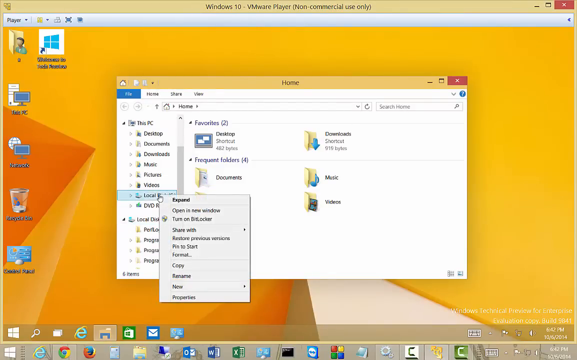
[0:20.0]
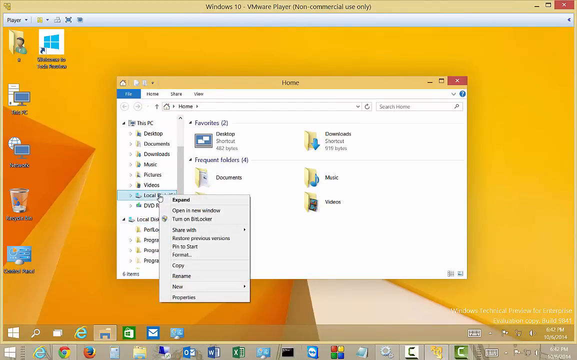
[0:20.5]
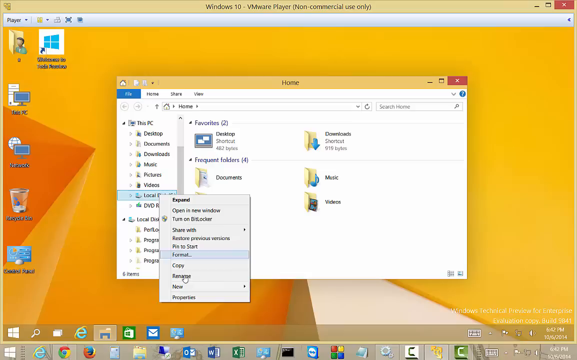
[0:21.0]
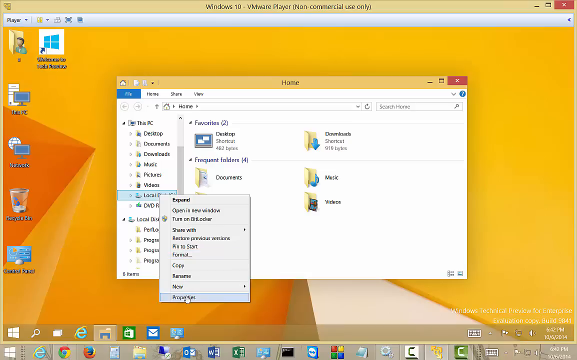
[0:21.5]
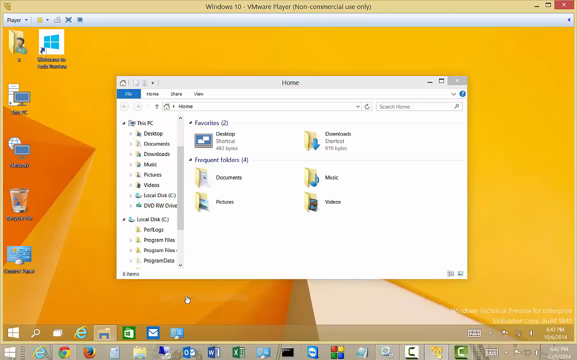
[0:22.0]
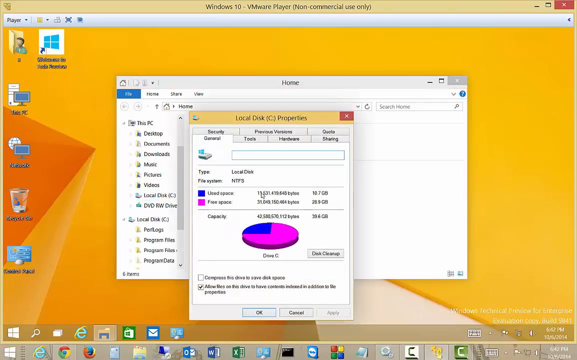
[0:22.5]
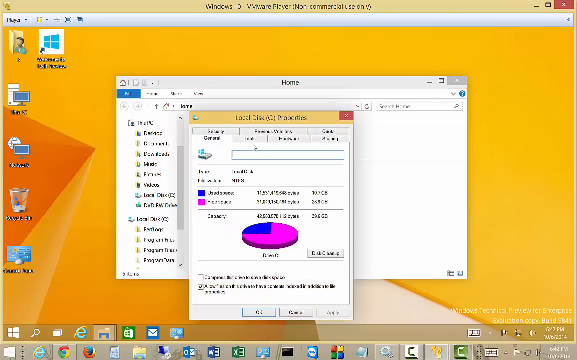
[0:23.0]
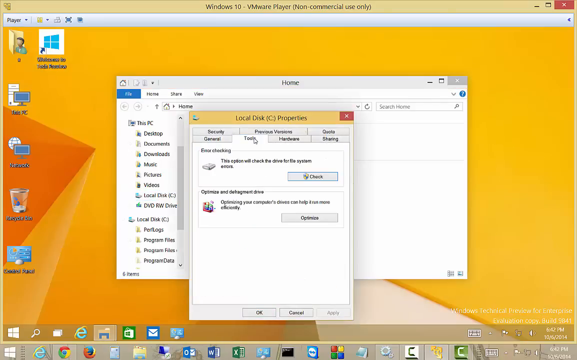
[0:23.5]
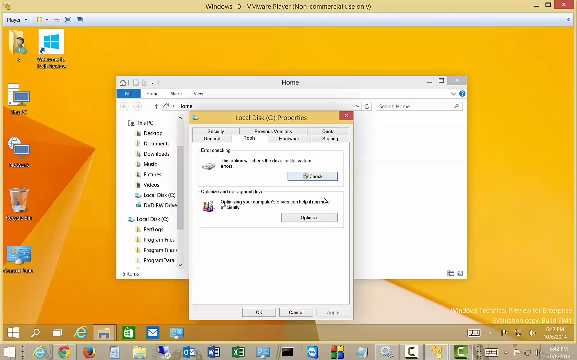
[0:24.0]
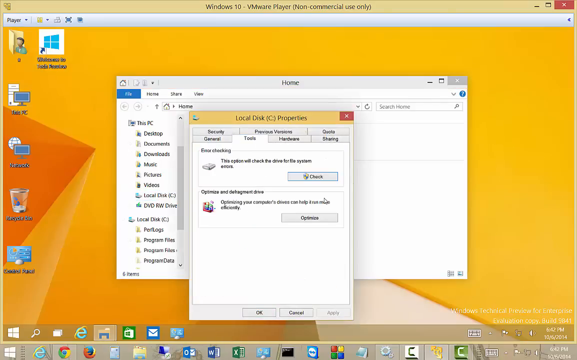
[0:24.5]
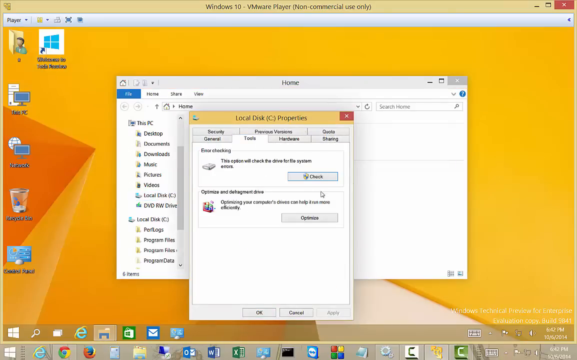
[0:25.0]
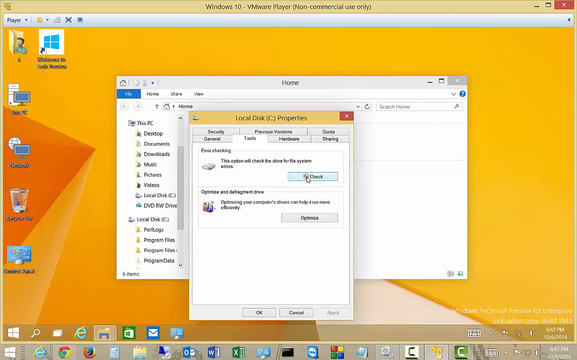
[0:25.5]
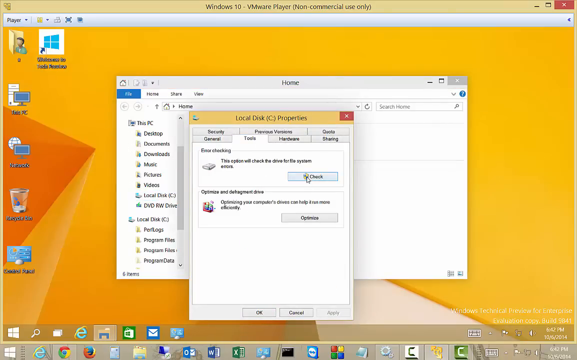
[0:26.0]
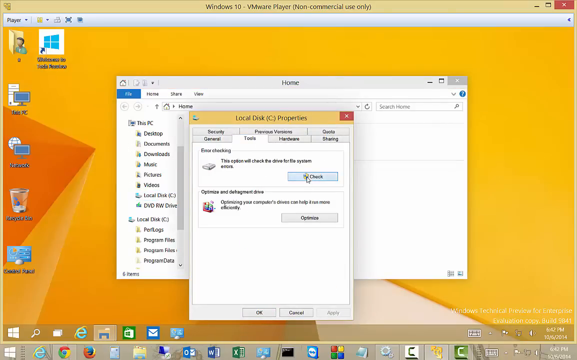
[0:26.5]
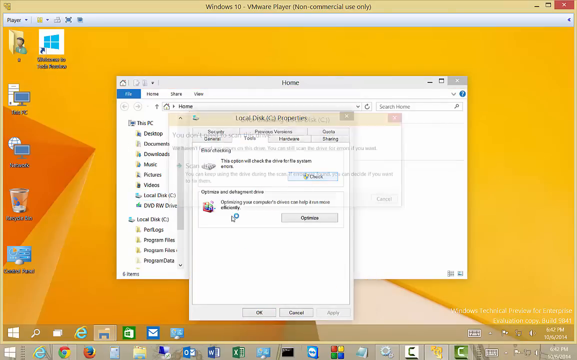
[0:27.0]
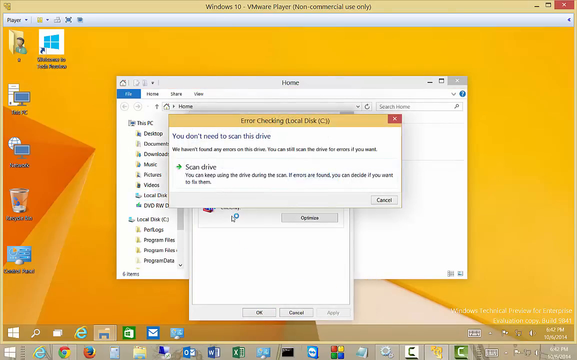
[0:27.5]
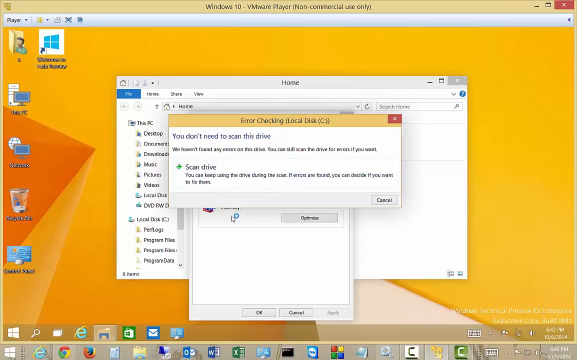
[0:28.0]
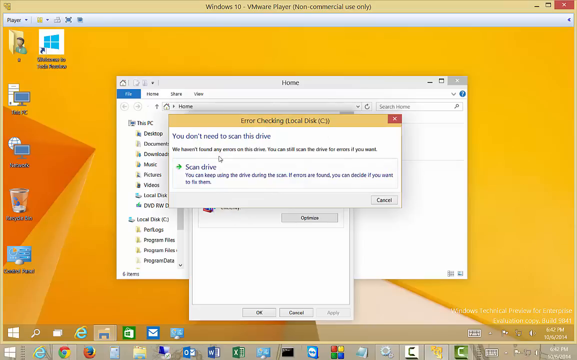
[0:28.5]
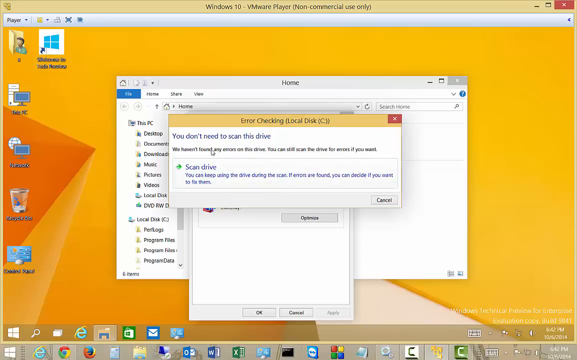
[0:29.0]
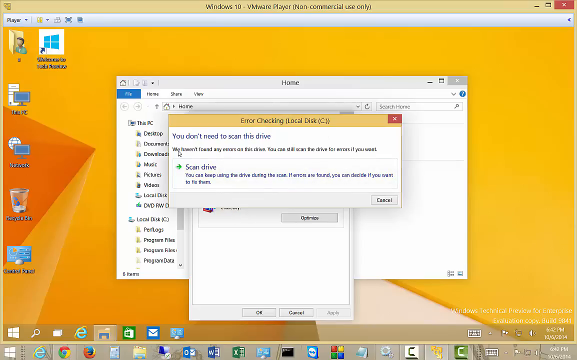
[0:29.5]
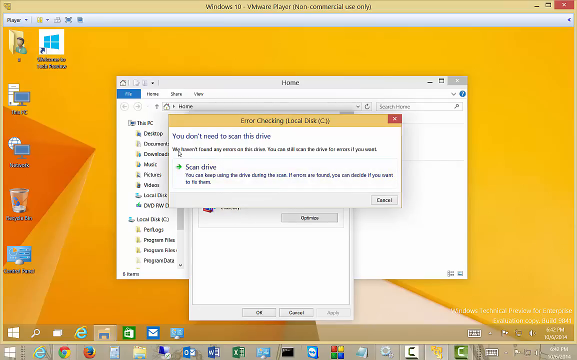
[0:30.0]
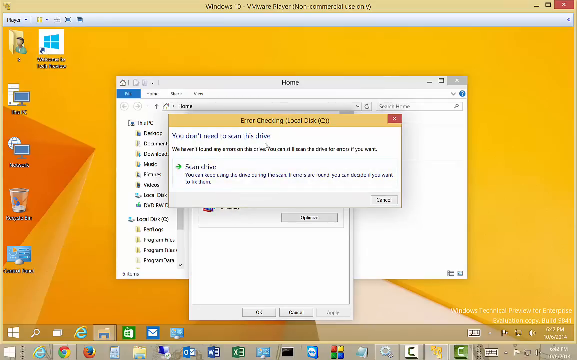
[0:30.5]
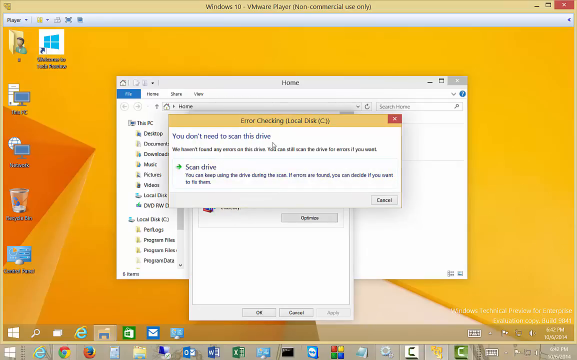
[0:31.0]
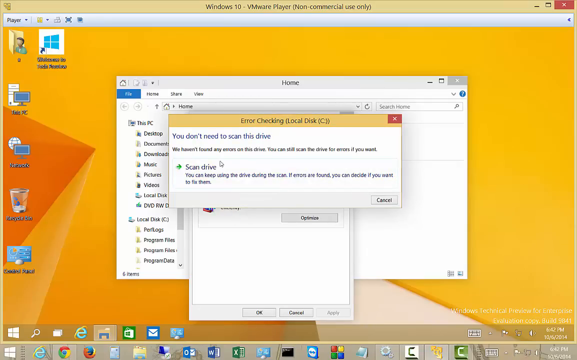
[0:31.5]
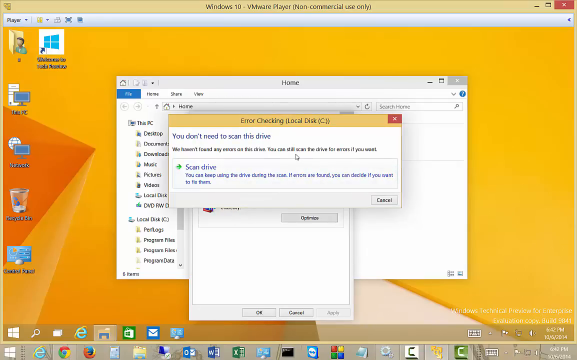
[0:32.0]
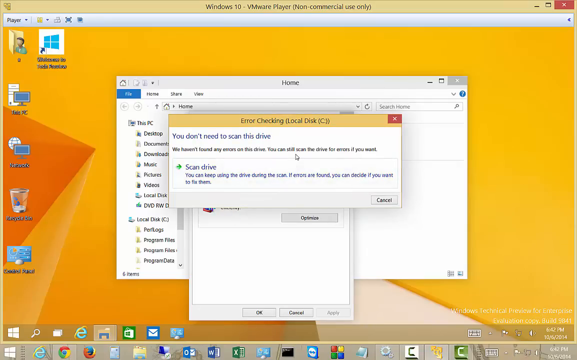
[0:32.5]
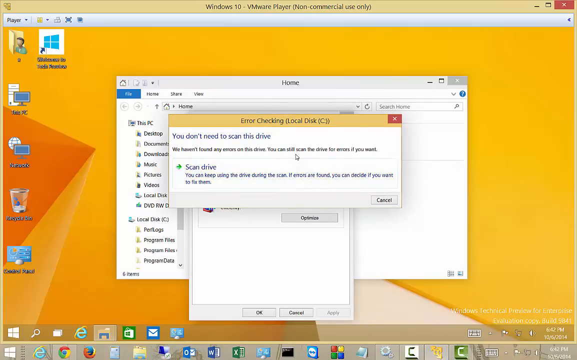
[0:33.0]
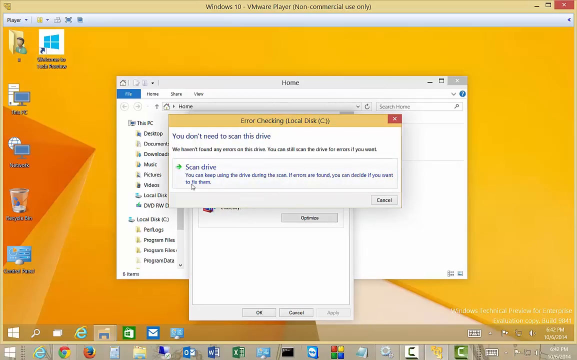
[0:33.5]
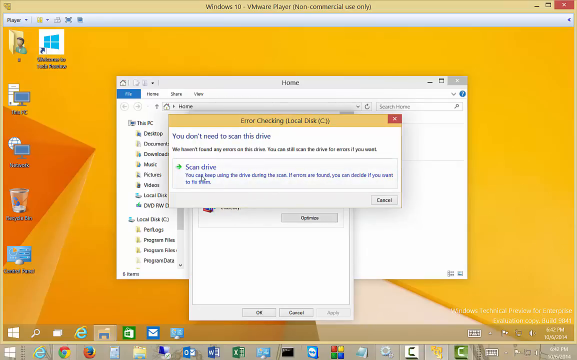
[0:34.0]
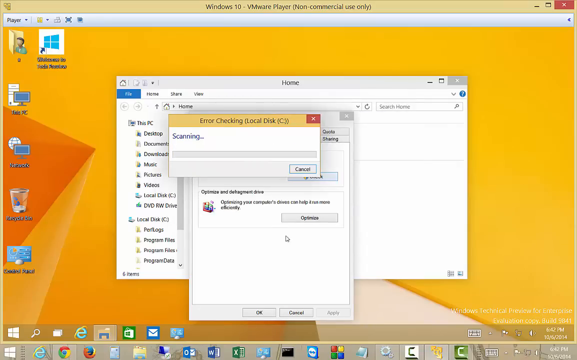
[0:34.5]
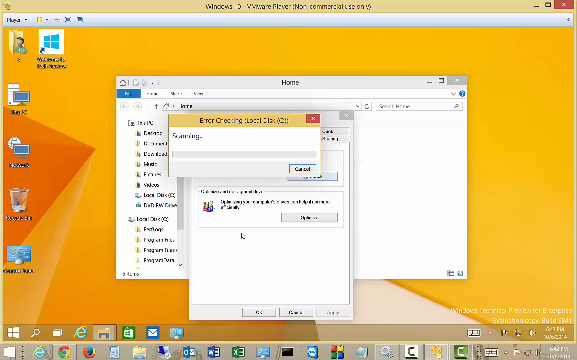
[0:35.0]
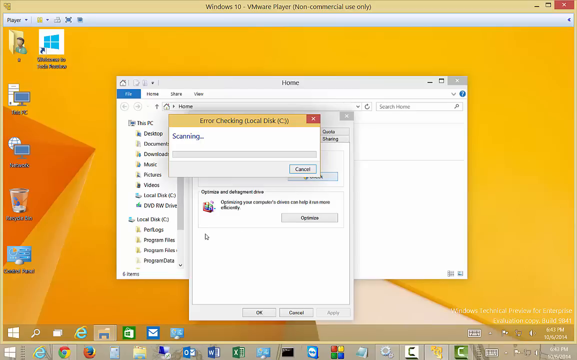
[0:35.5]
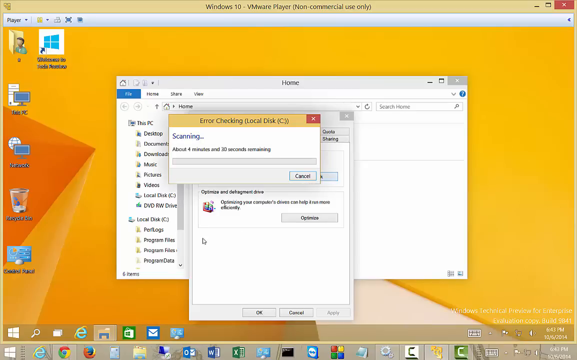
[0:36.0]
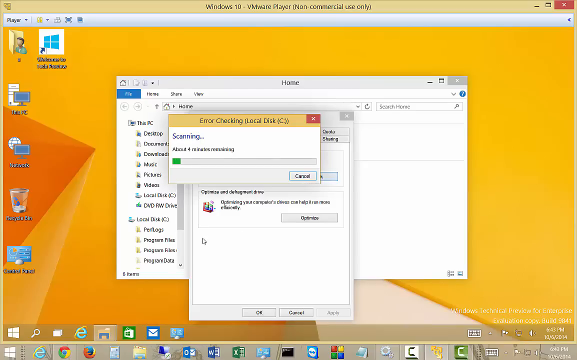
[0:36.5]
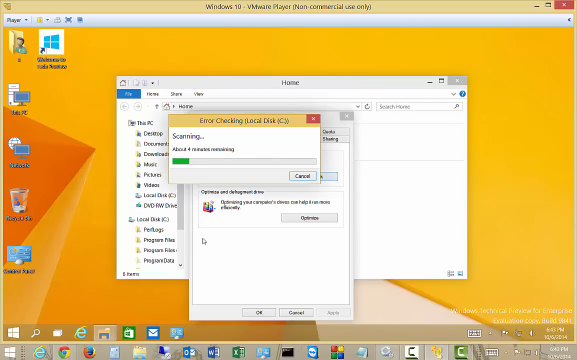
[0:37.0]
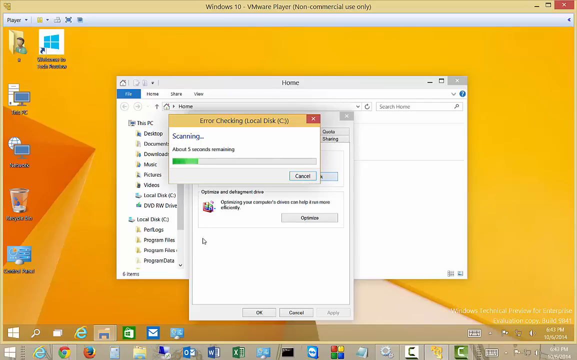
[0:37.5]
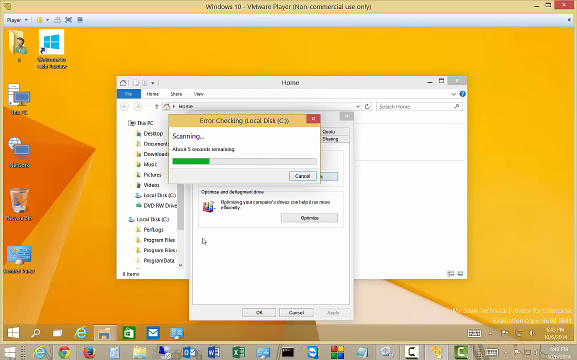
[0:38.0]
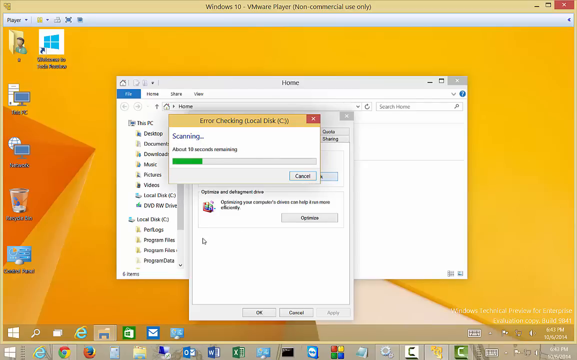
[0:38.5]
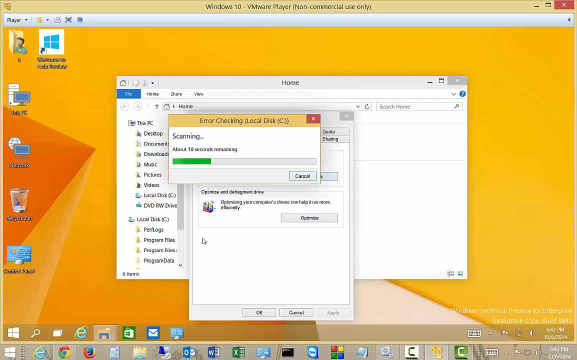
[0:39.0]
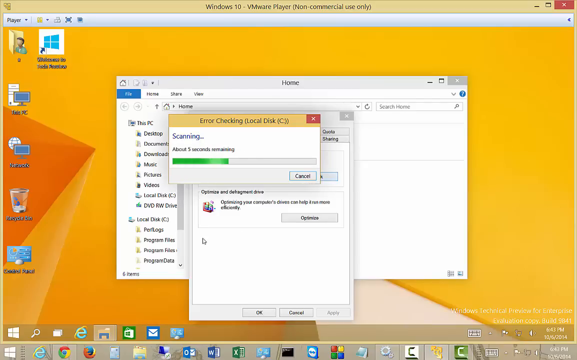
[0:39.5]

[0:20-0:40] The yellow background of a PC computer with geometric shapes that look like pyramids is shown, with text on top reading "Windows 10 VMware player non-commercial use only." On the left are six icons, one that says "your PC", another the recycle bin, and others. In the middle of the screen a window that says "home" has popped up. The mouse highlights the Local Disk section and right-clicks on it, then moves down to Properties, which opens another window that says "properties." The mouse goes to the Tools section, then to Check and clicks on it. Another window pops up that says "error checking" and "you don't need to scan this drive," with an option at the bottom that says "scan drive" and another that says "cancel." The mouse clicks on Scan drive, and another window pops up showing a loading bar.